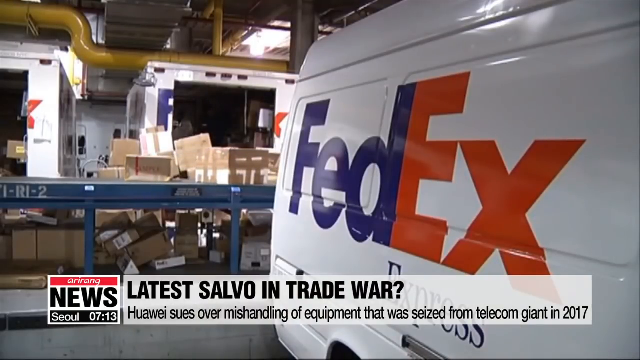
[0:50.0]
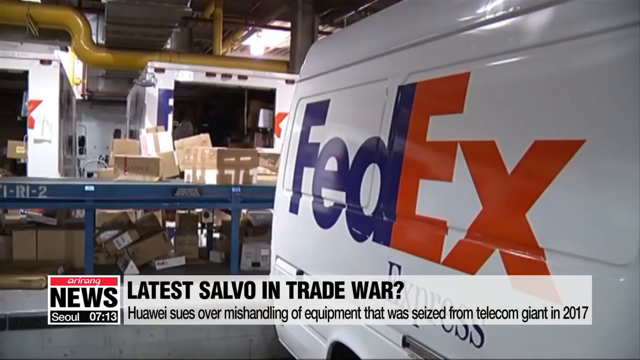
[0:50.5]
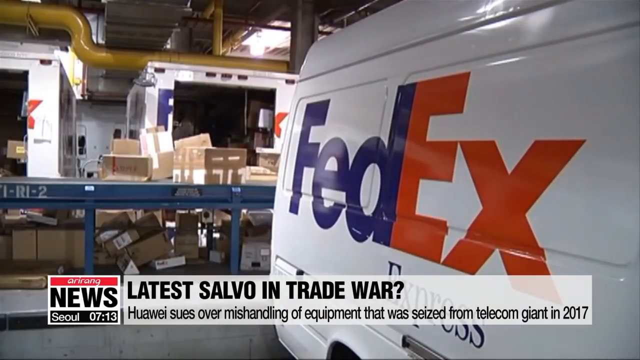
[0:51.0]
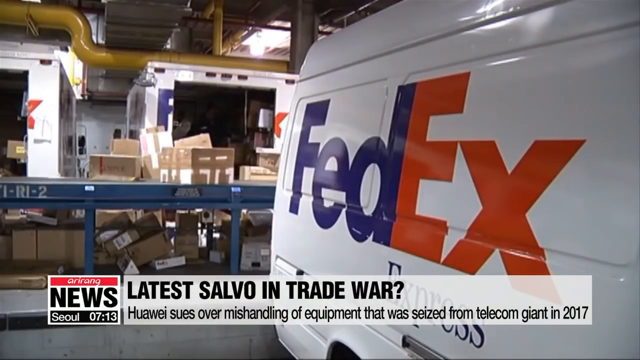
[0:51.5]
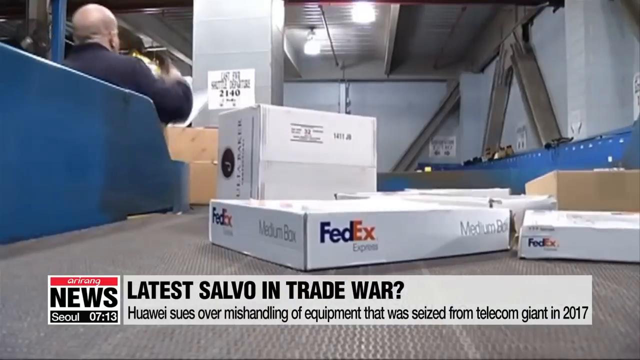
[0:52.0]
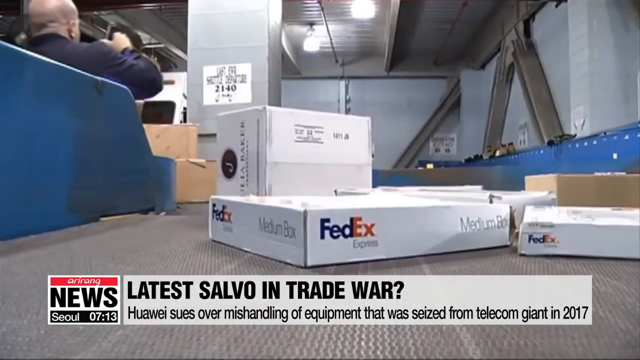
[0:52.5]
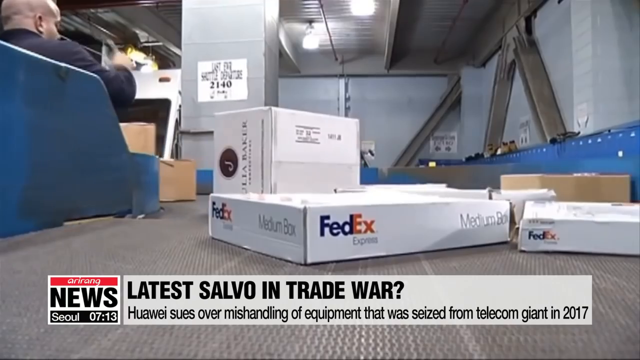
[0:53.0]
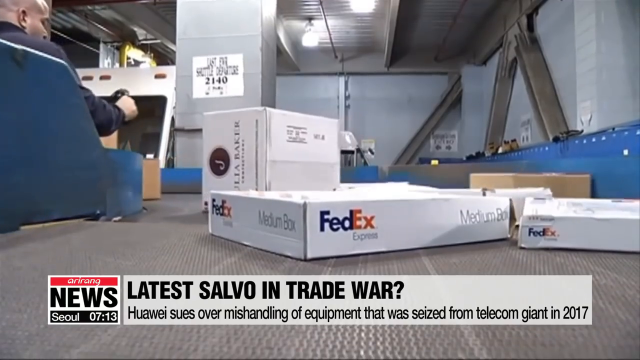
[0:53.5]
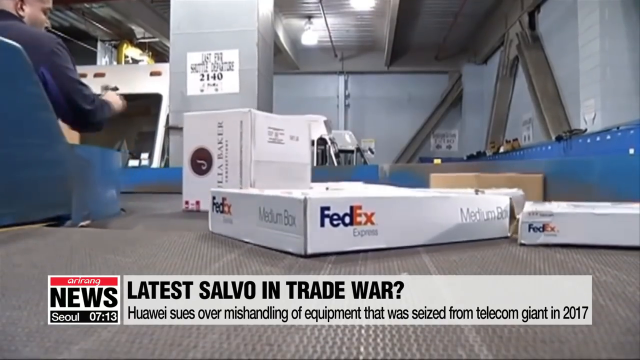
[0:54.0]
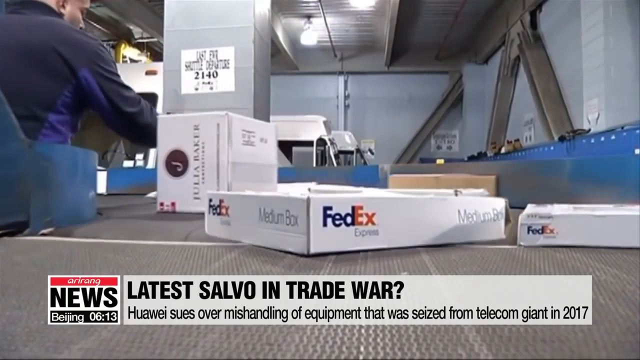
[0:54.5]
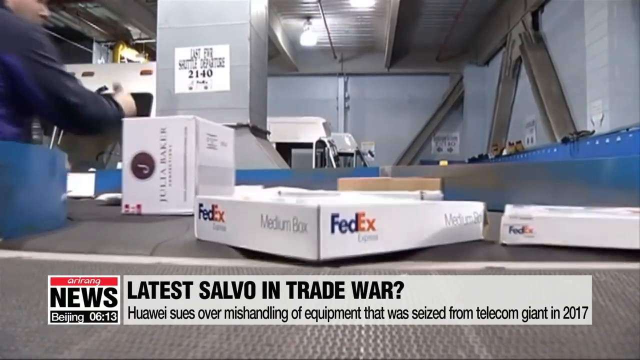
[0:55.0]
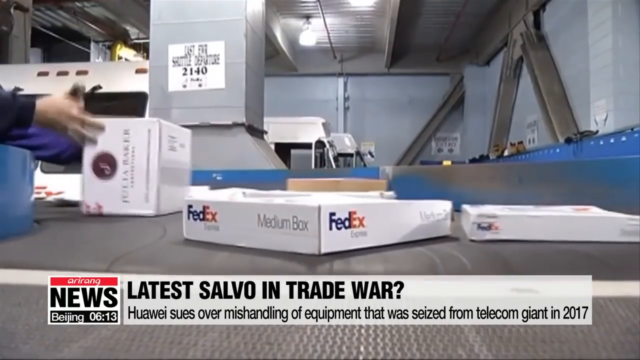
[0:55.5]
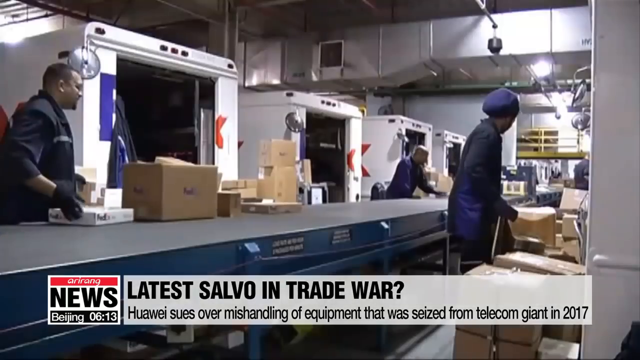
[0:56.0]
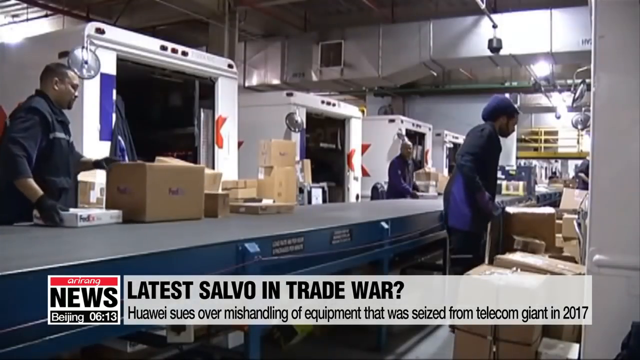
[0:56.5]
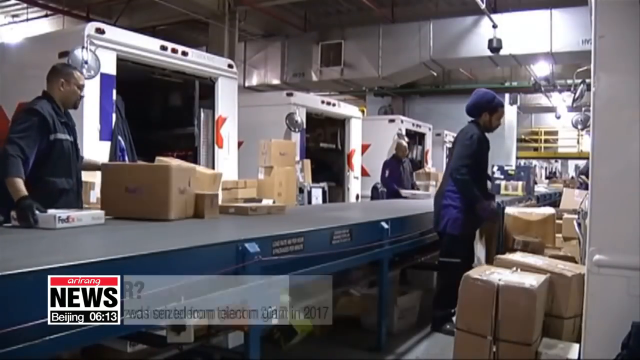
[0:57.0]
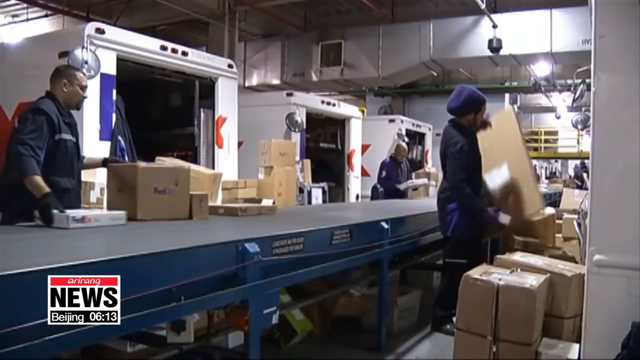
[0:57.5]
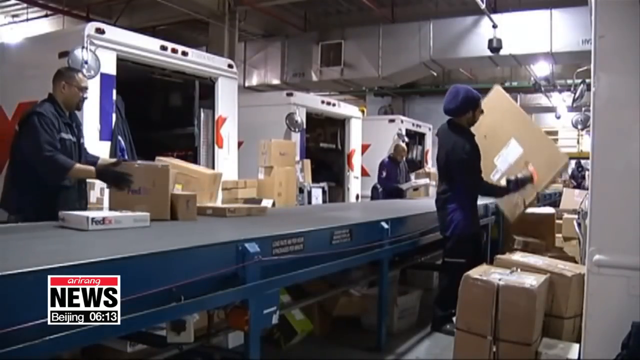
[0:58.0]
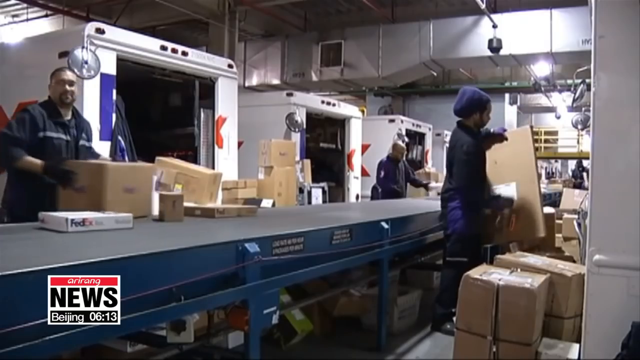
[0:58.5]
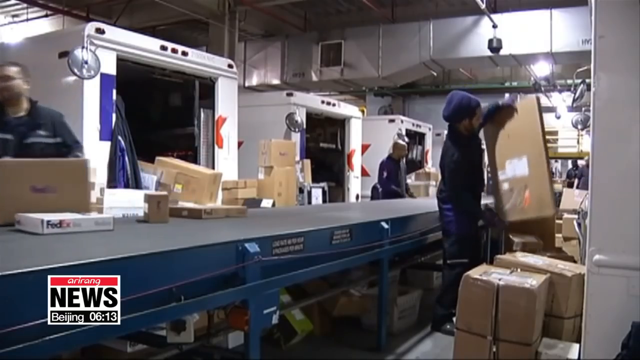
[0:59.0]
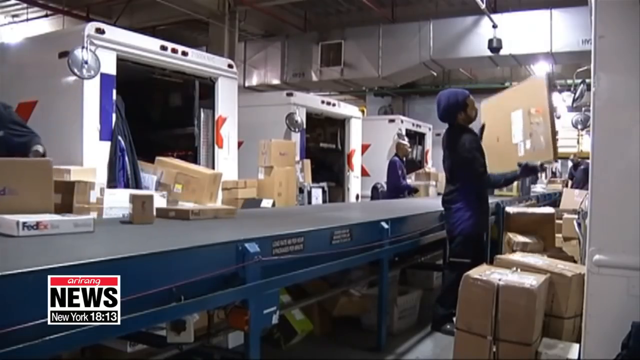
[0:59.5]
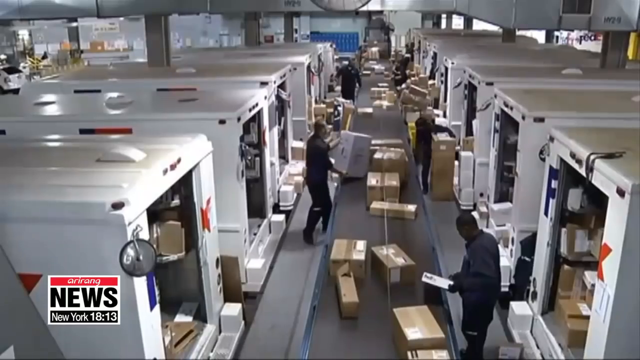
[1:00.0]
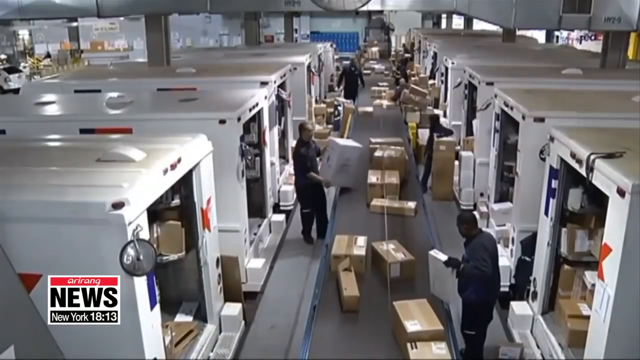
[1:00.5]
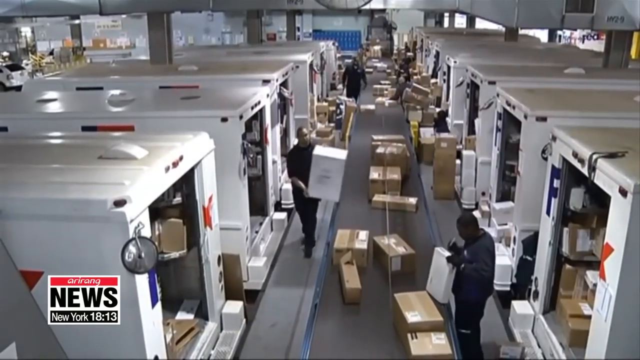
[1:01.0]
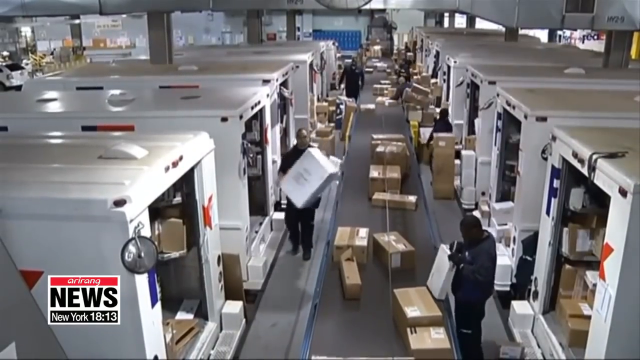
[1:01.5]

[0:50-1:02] Boxes of different colors, some white and others brown, move along a conveyor belt with blue edges. When they reach the bottom of the structure, the boxes rotate and turn to the left. In the upper left corner of the frame is a man wearing a dark blue and purple jacket. Next, people stand next to a conveyor belt, picking up cardboard boxes from the floor and scanning the white labels on the boxes with a scanner. White wagons are visible in the background.